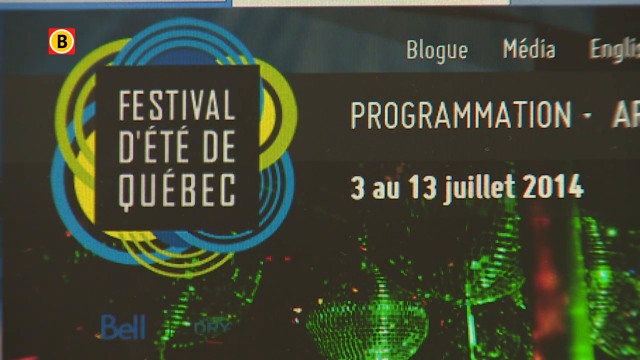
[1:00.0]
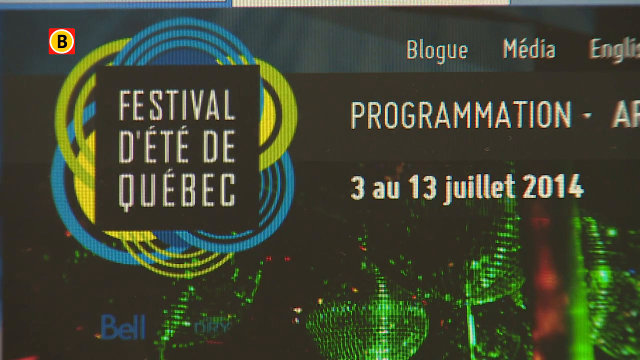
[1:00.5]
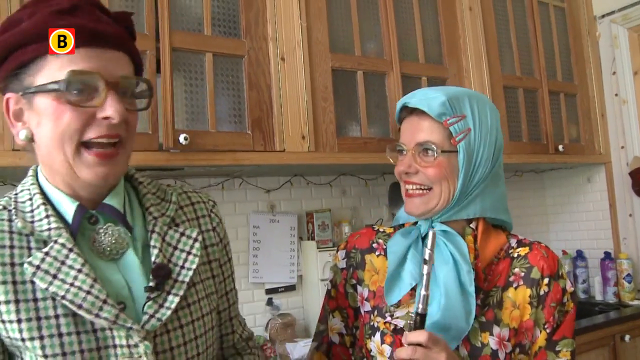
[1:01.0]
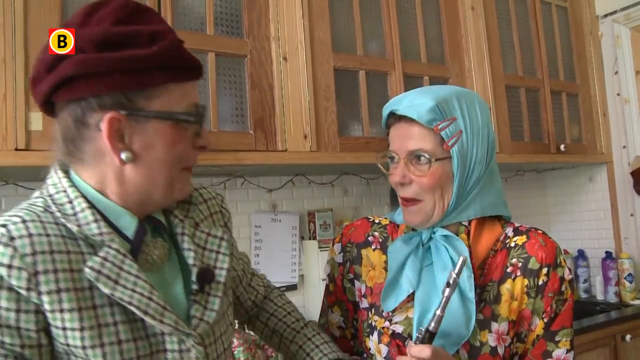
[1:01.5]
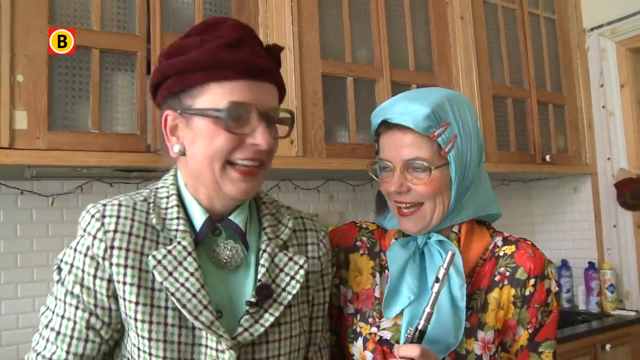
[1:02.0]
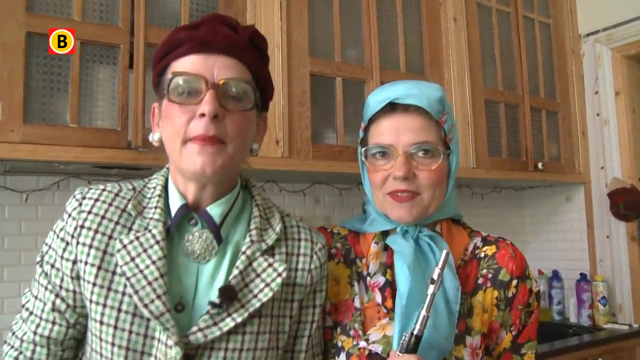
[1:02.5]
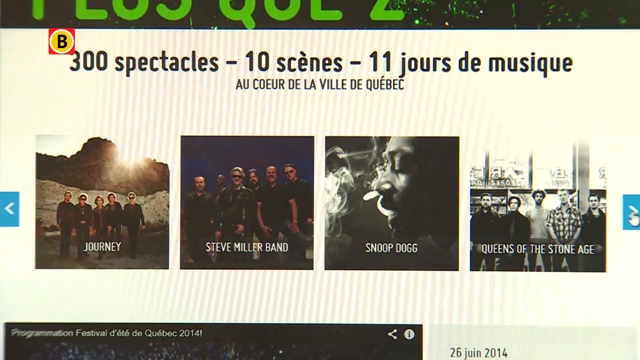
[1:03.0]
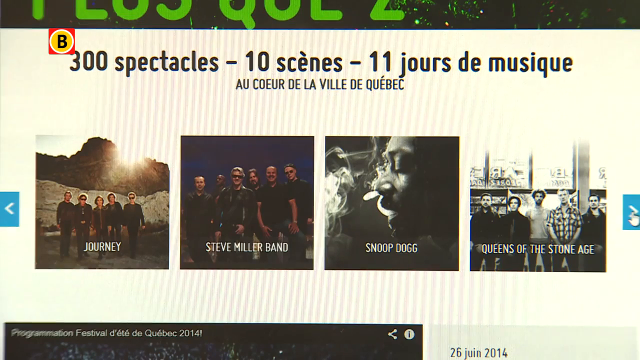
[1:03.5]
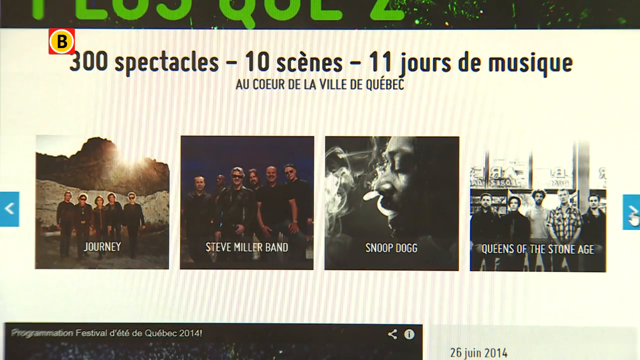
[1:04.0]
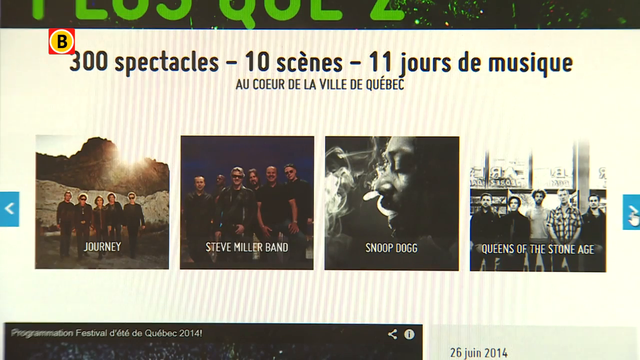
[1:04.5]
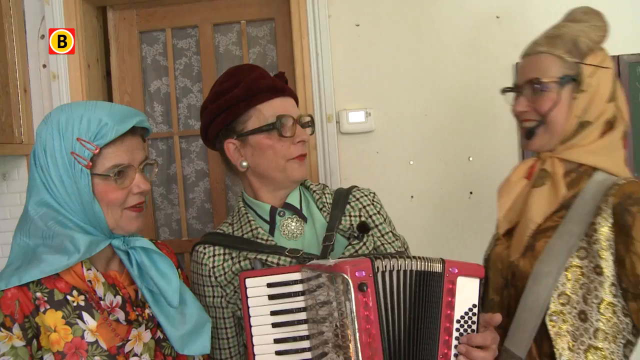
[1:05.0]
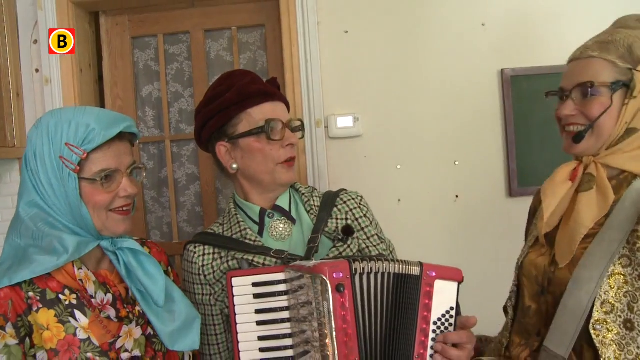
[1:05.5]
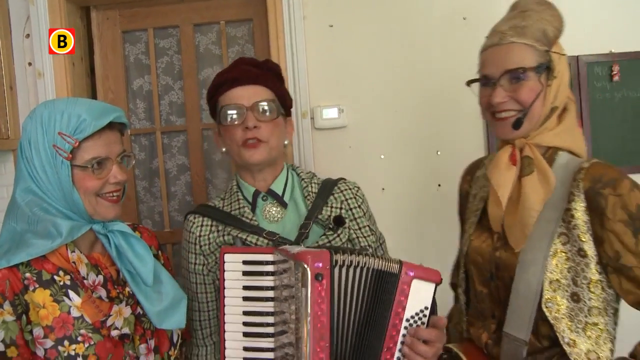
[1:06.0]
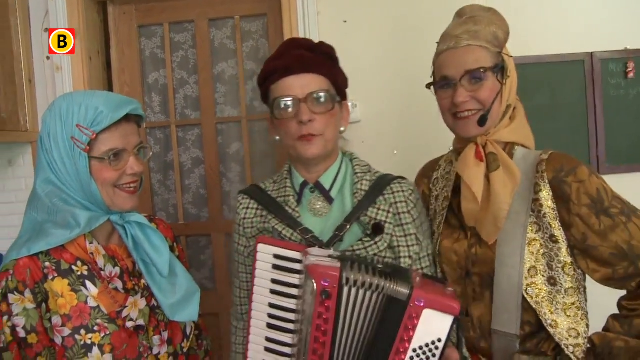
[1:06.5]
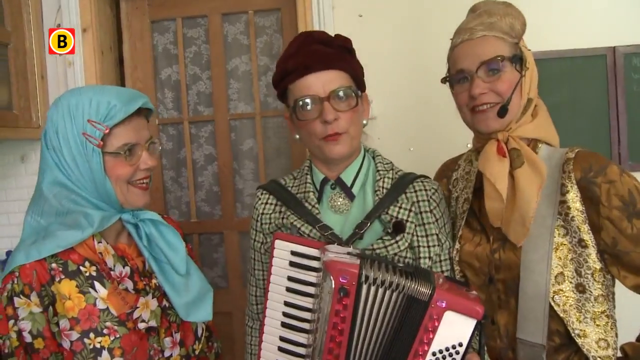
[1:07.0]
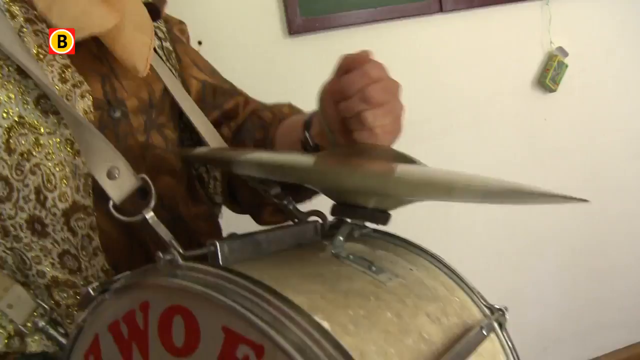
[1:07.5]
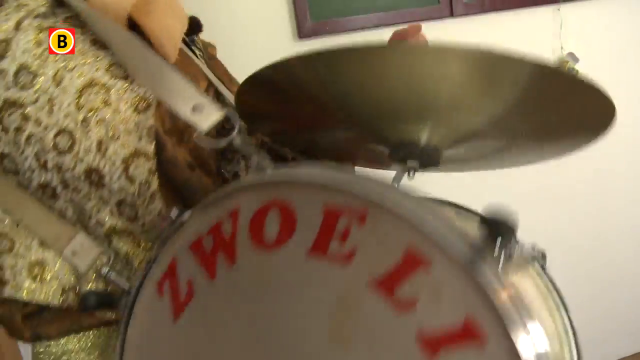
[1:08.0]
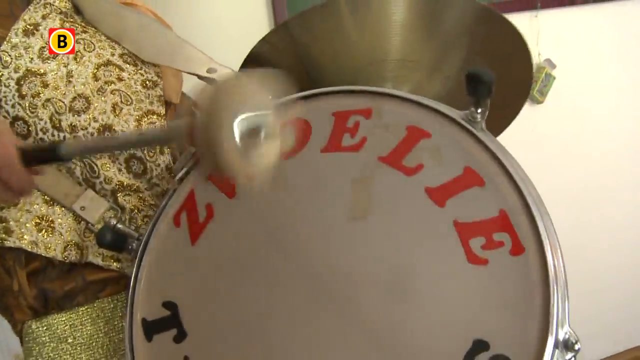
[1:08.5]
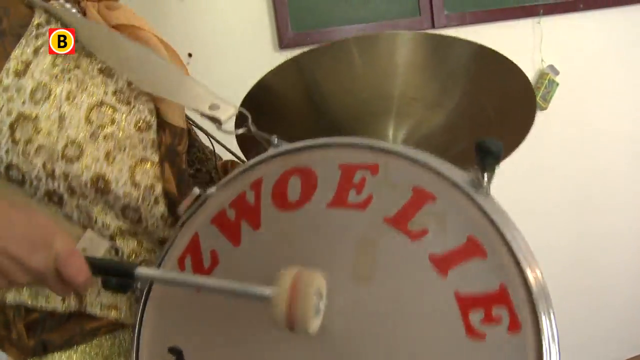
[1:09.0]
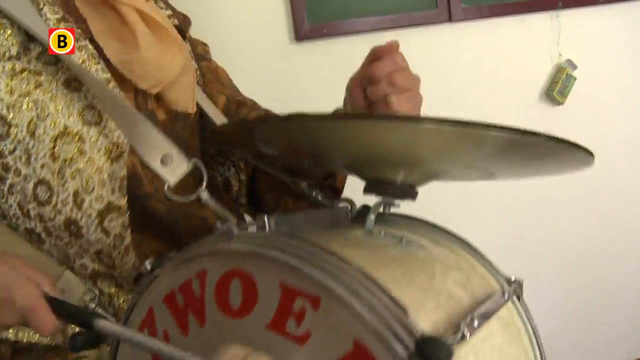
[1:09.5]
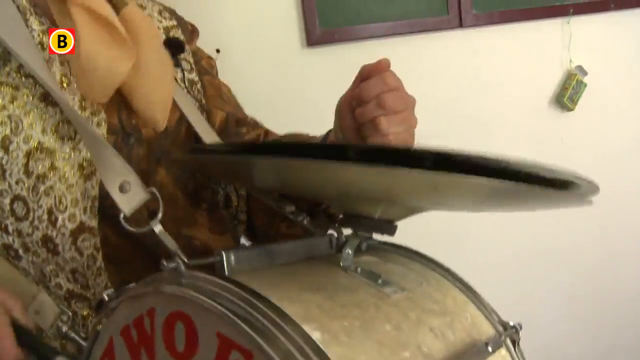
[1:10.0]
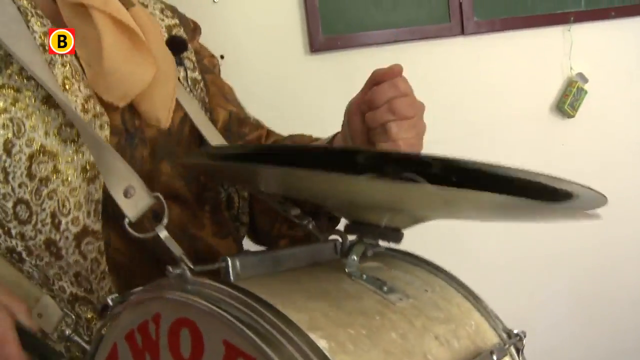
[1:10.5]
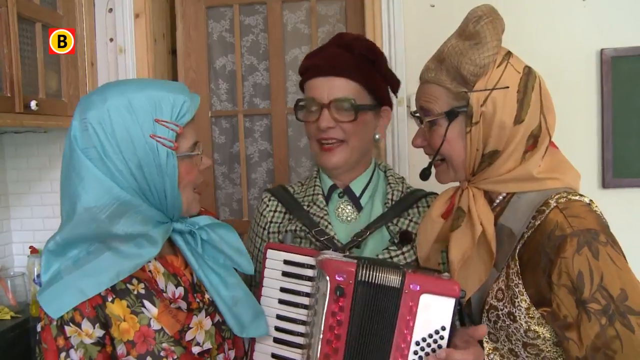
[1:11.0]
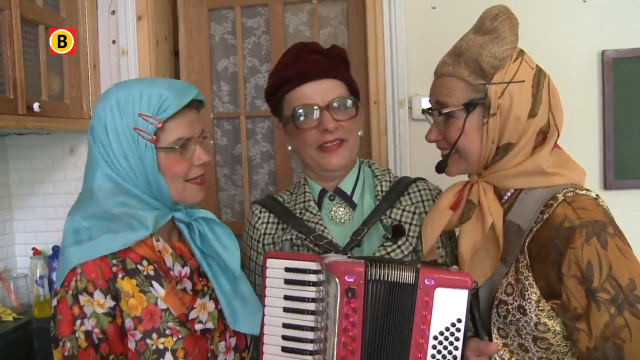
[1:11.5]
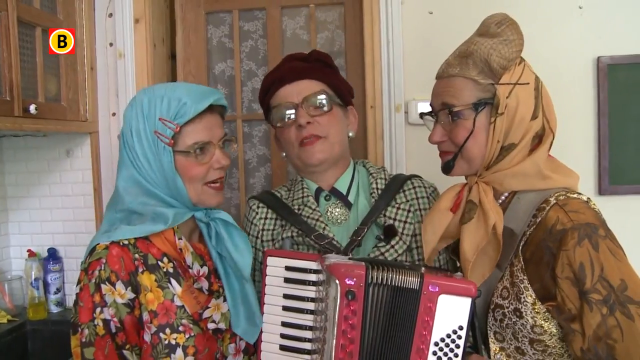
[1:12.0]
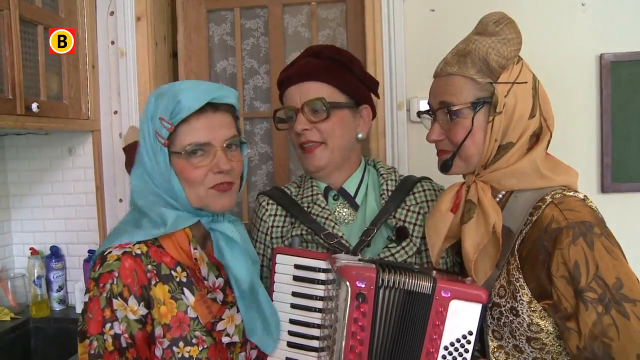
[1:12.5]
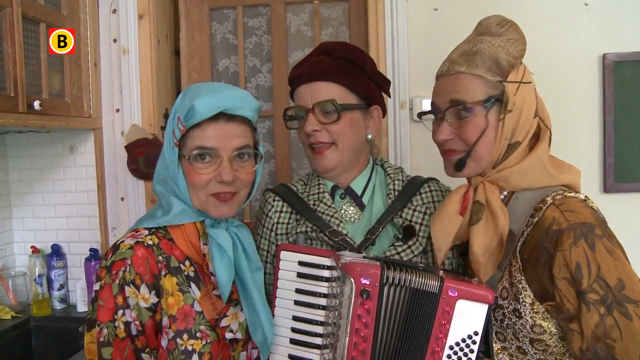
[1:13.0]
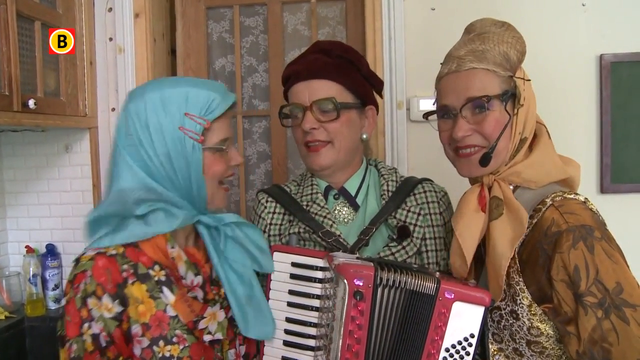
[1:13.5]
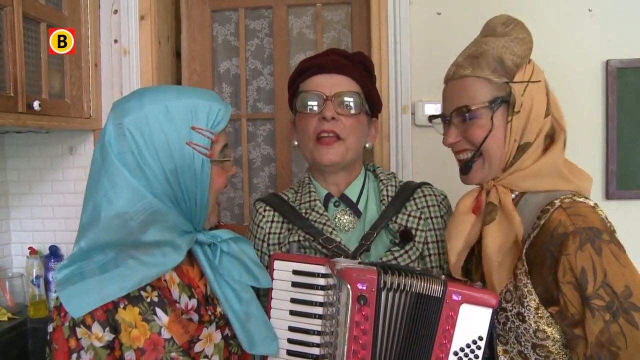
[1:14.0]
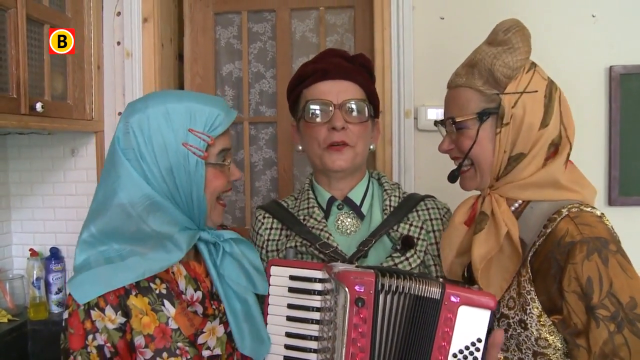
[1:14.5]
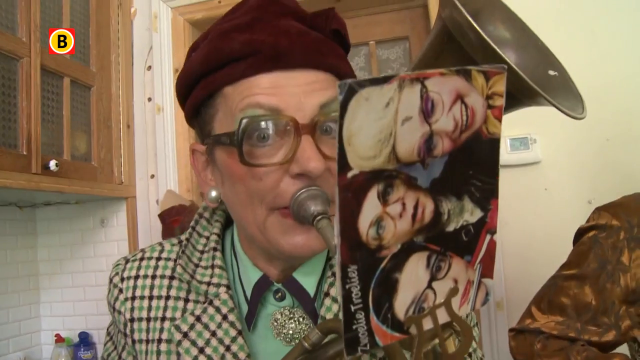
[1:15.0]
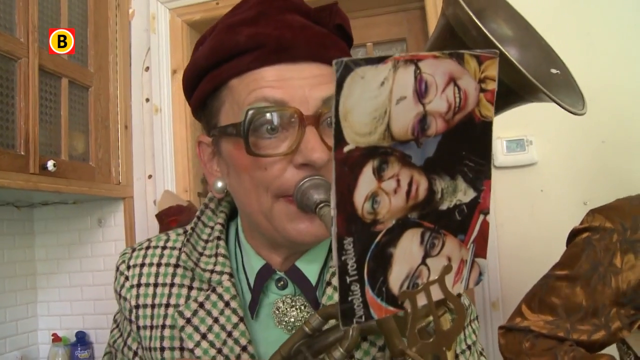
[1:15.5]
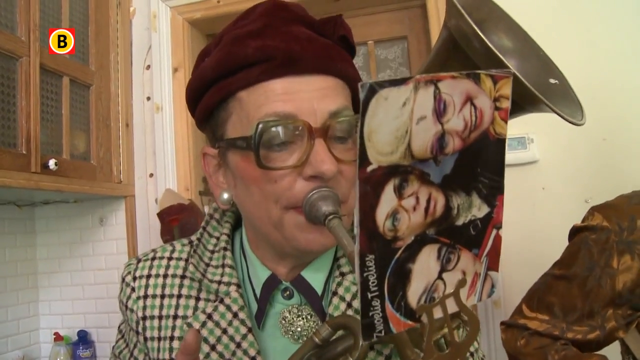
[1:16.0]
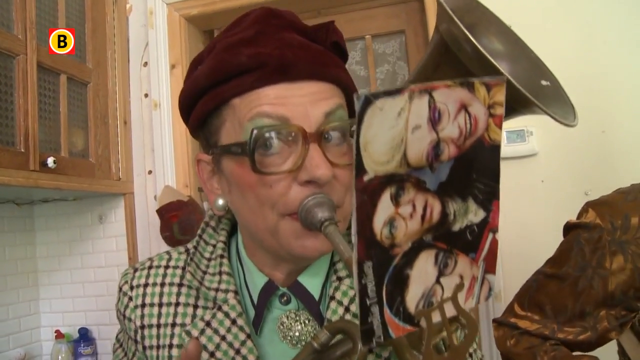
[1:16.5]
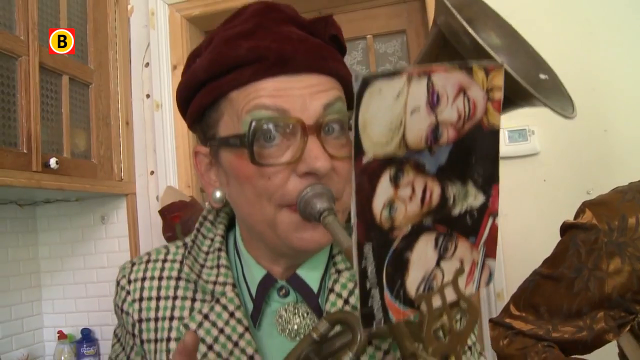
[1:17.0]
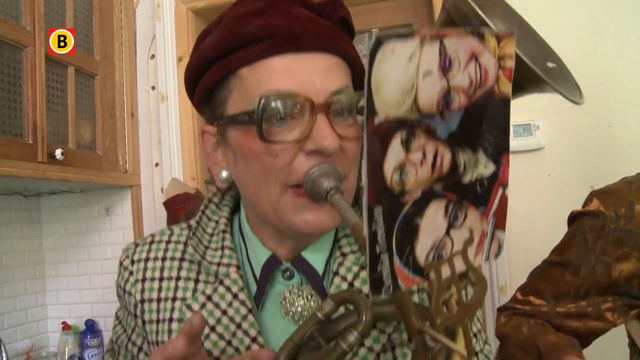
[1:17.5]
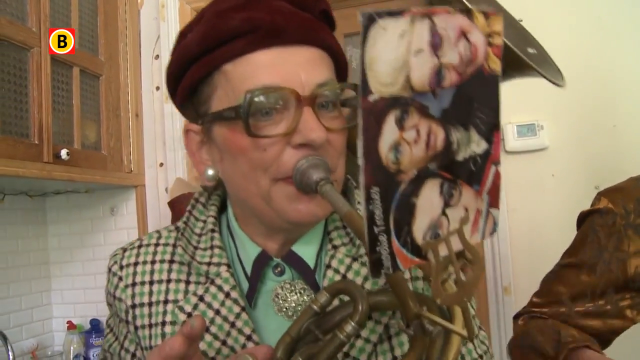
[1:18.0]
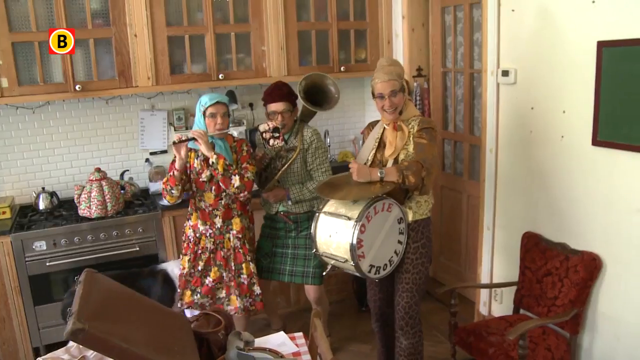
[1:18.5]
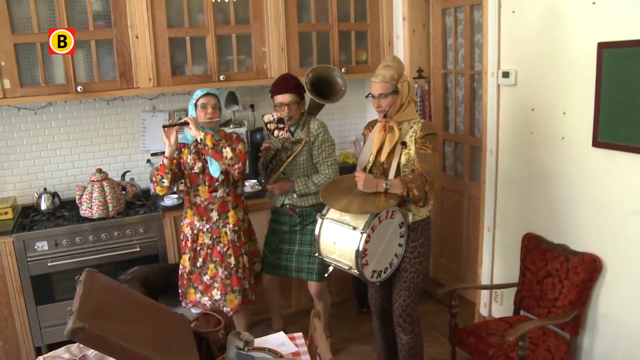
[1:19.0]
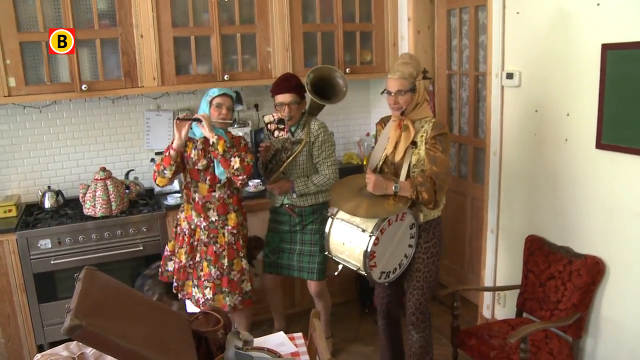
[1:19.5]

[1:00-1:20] The camera records a web page in French, which reads "Festival d'Etat de Quebec" along with "Blog Media English Programmation". The video cuts to two women inside a kitchen. Behind them, the walls are tiled with white subway tiles, and the light brown cabinets have frosted window panes through which various white porcelain cutlery and plates can be seen. The woman on the right wears a floral dress with a light blue headscarf. The woman in the center wears a red bonnet with a plaid green jacket. The video then cuts to a web page again, showing four different bands: Journey, Steve Miller Band, Snoop Dogg, and Queens of the Stone Age; it seems to be some kind of music festival in Quebec. It cuts back to the kitchen with a new woman in frame, wearing a yellow floral vest with a gold silk dress underneath and a gold silk headscarf. The woman in the gold vest is shown playing a bass drum and cymbals, and then the video cuts back to the kitchen with the three people talking to the camera again.